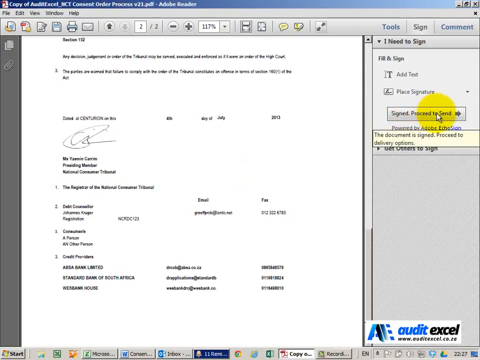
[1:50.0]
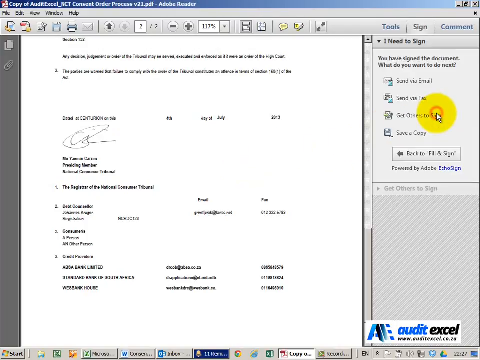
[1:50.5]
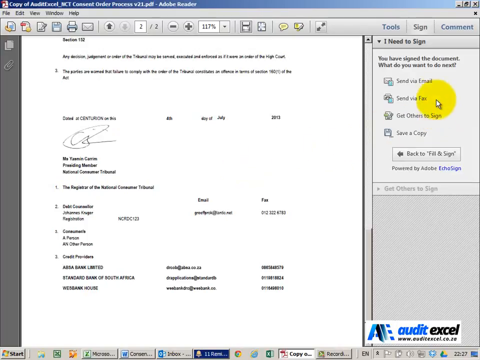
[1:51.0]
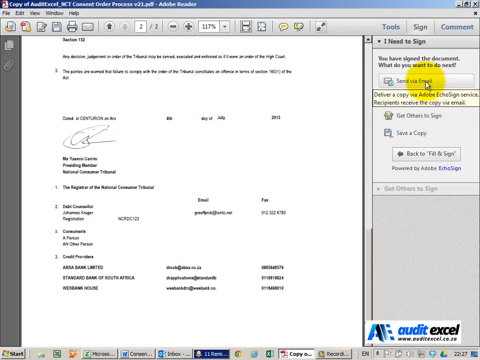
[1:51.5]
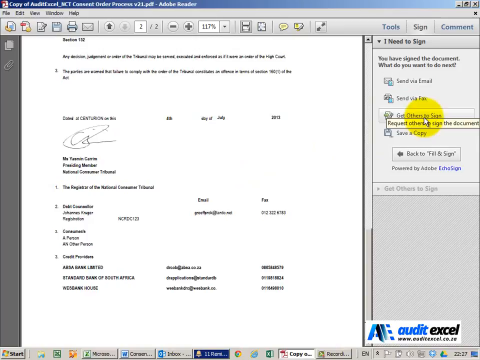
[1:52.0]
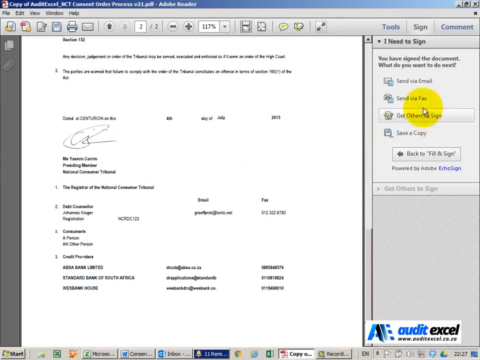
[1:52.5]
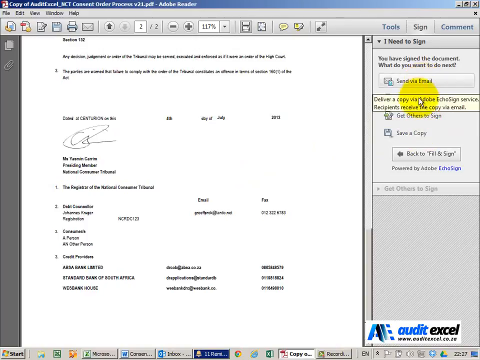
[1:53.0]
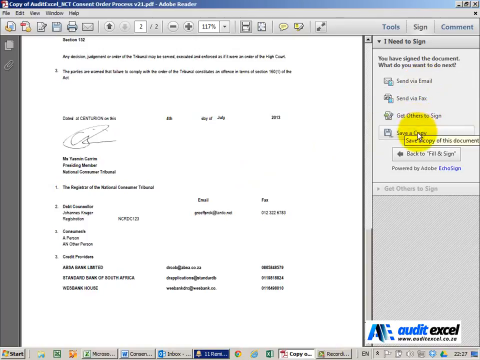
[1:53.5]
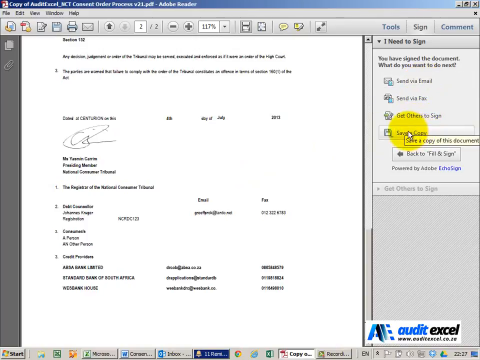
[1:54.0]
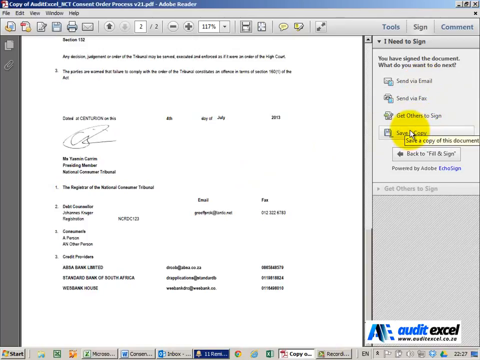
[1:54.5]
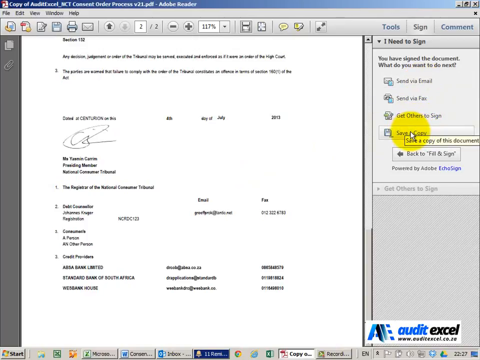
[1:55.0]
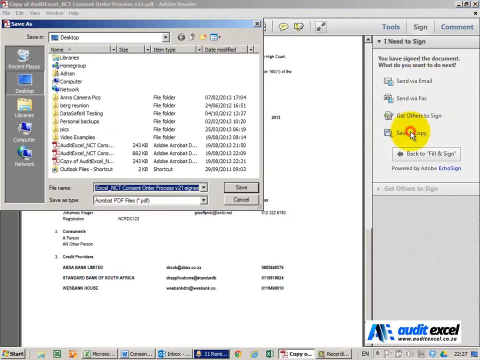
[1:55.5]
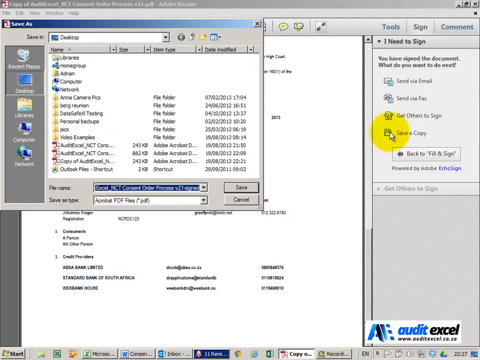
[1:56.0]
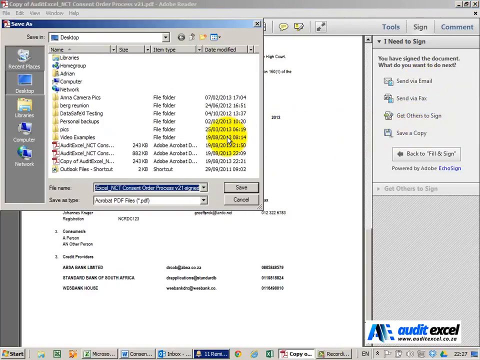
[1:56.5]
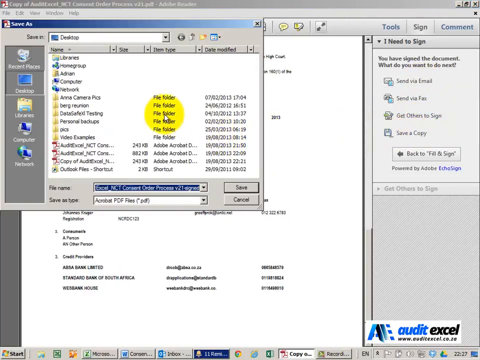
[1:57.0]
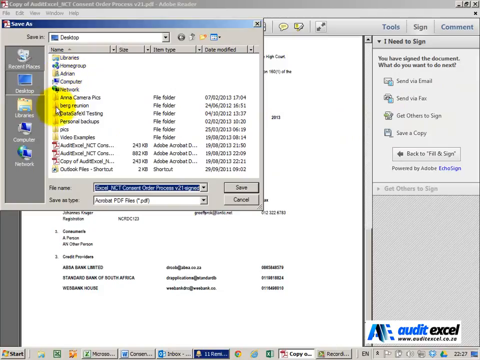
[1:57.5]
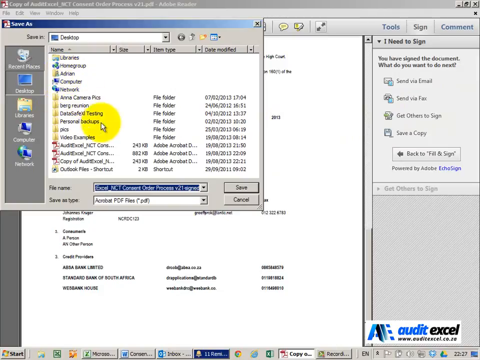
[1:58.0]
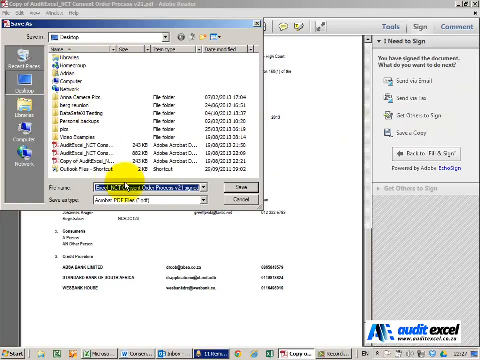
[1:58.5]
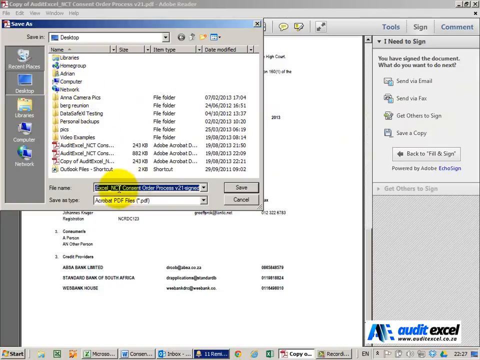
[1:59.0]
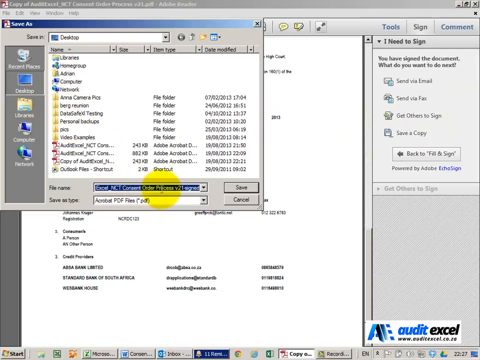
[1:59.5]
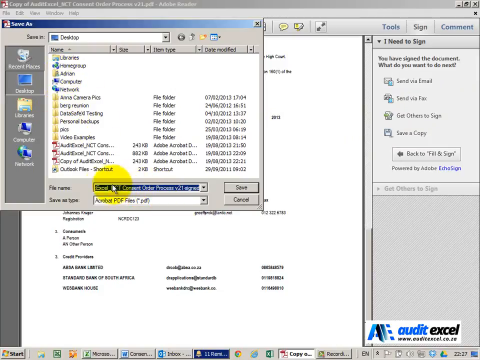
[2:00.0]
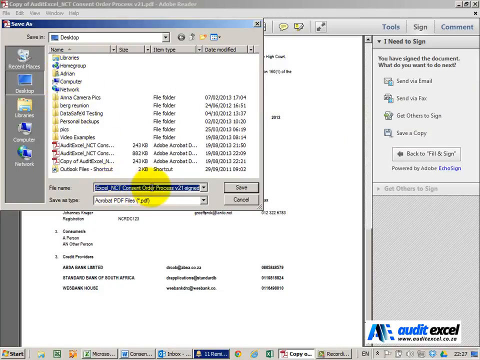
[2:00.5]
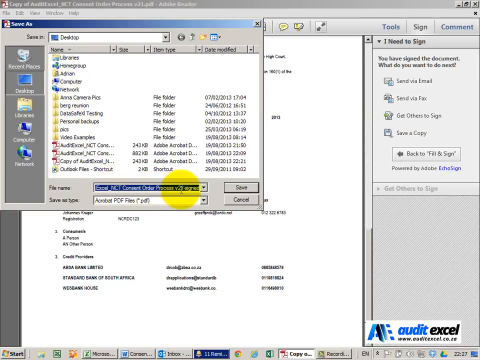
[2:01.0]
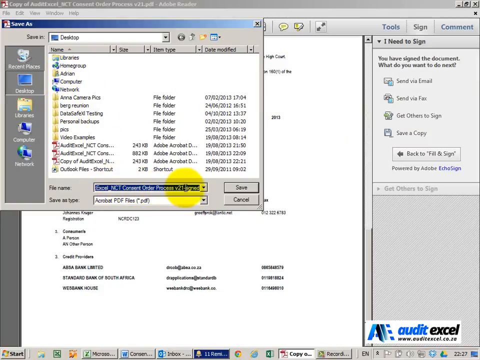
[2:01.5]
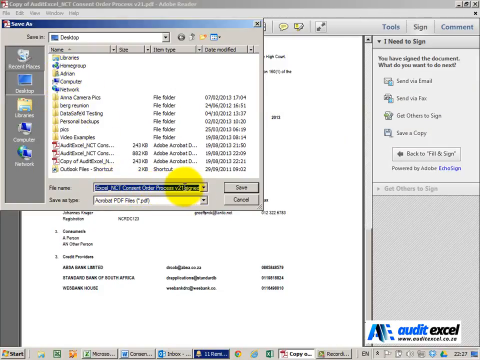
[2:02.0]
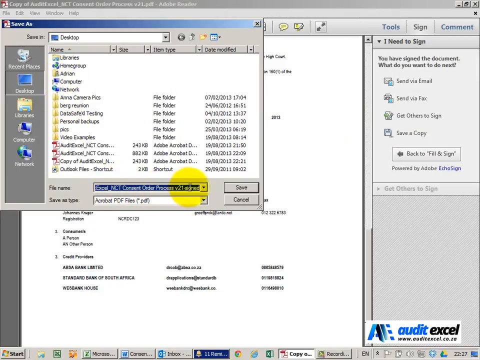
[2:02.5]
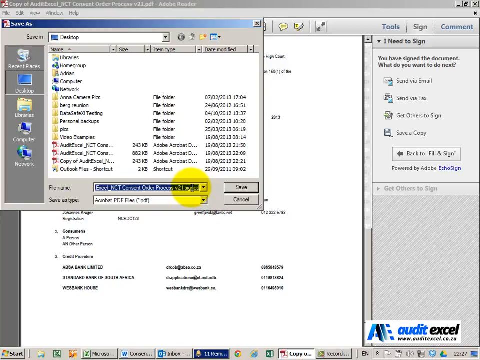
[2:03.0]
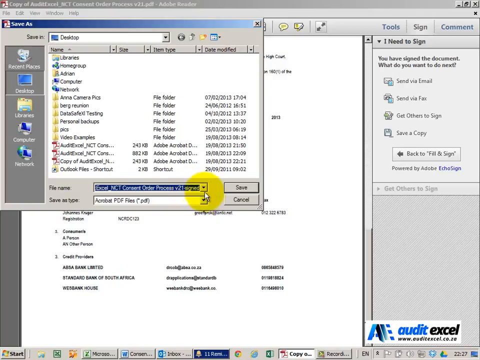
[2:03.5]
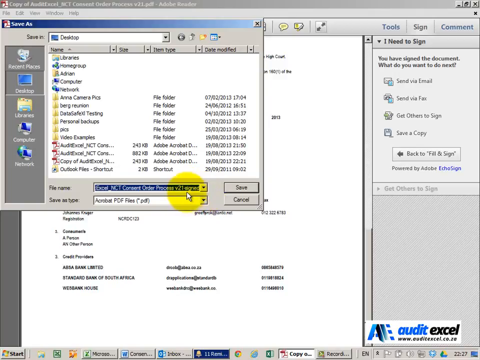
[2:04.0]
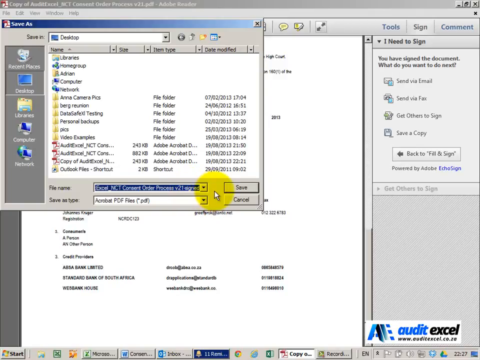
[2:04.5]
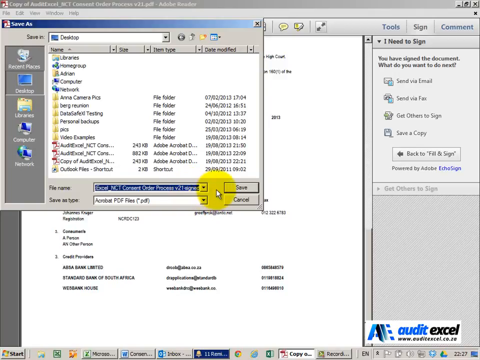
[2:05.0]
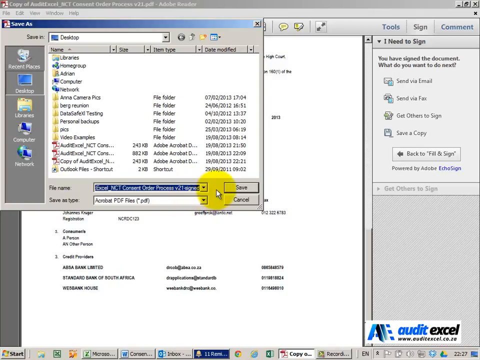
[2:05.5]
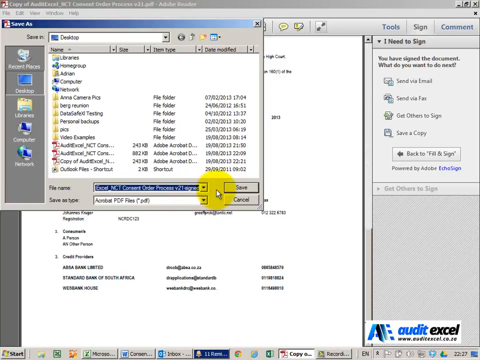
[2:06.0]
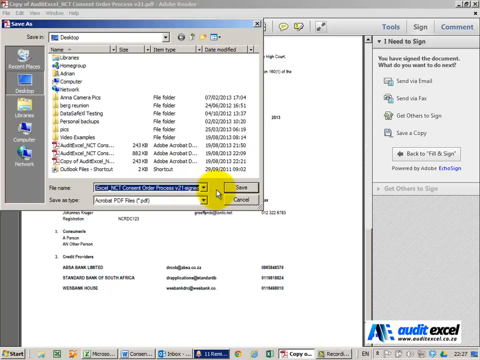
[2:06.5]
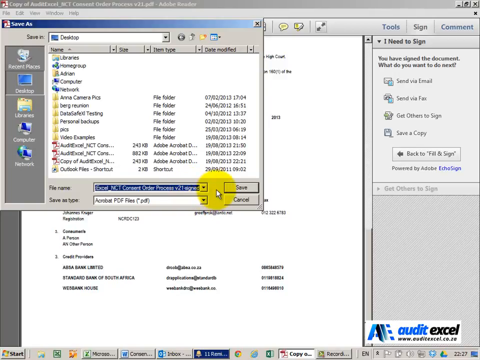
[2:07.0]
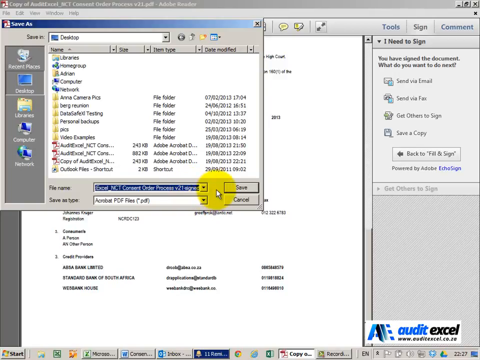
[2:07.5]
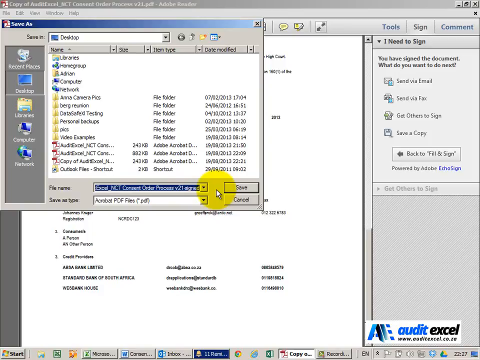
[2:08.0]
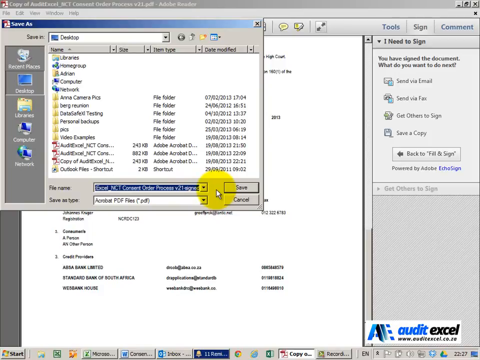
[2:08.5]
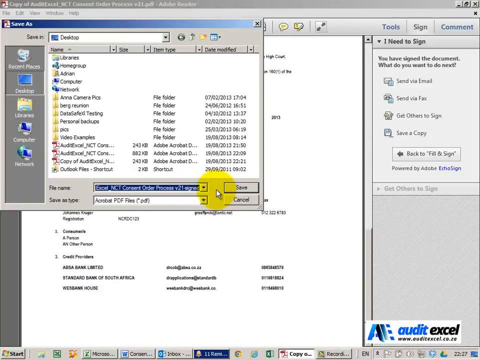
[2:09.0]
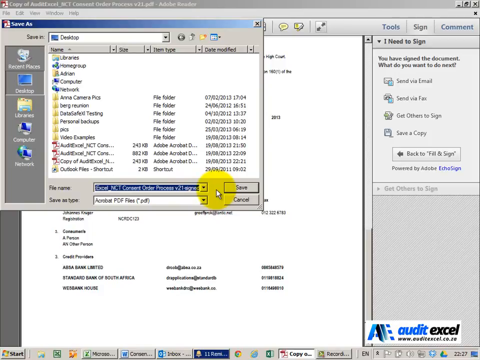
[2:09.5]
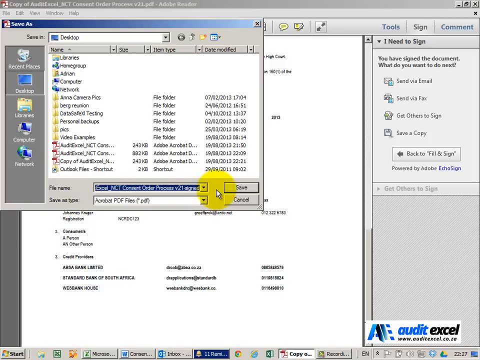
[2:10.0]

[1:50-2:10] The yellow-highlighted mouse pointer selects a file, which opens another window. The user then tries to open another window and highlights the name of the file, possibly to save recent changes. There are many files in the library. The PDF appears to be from some sort of tribunal or a newspaper.